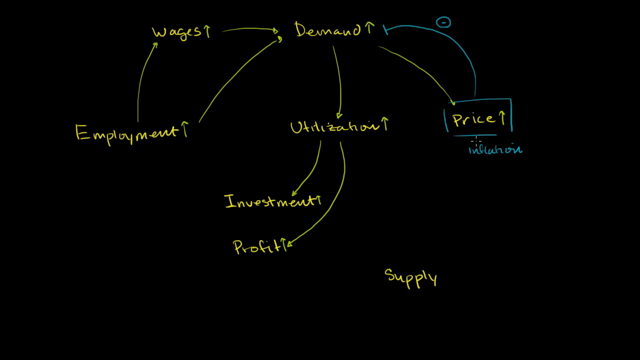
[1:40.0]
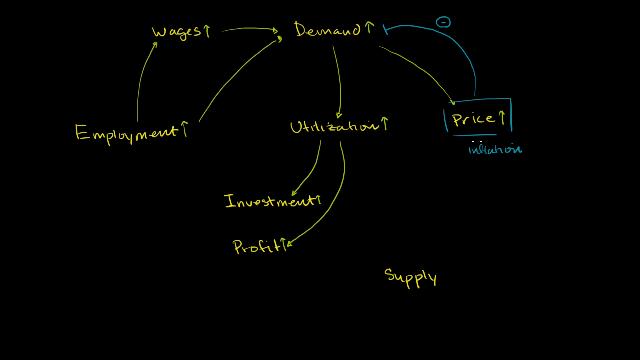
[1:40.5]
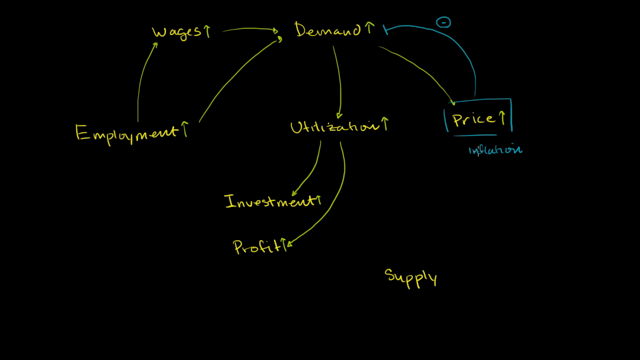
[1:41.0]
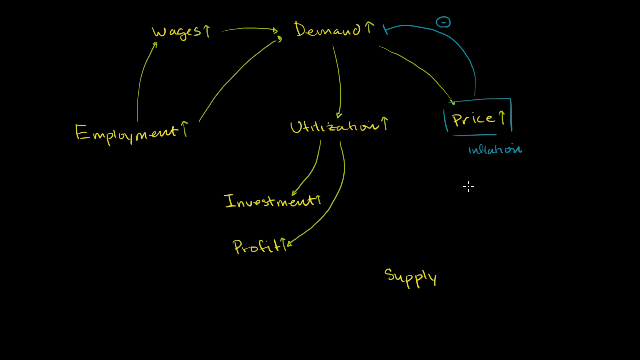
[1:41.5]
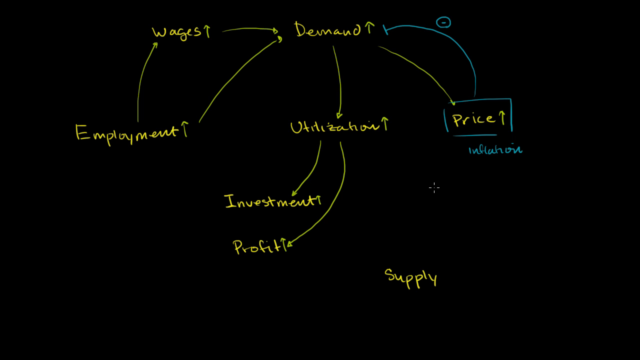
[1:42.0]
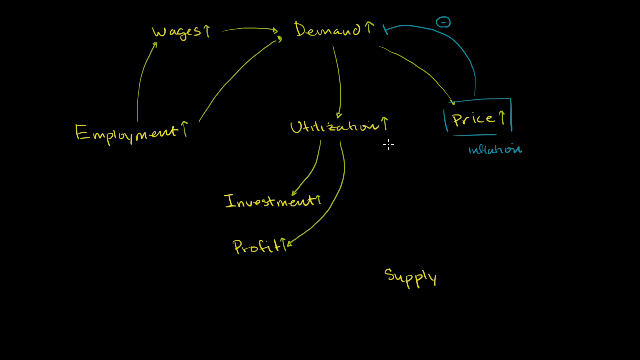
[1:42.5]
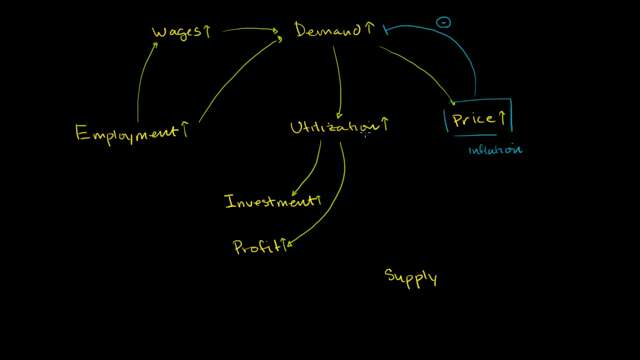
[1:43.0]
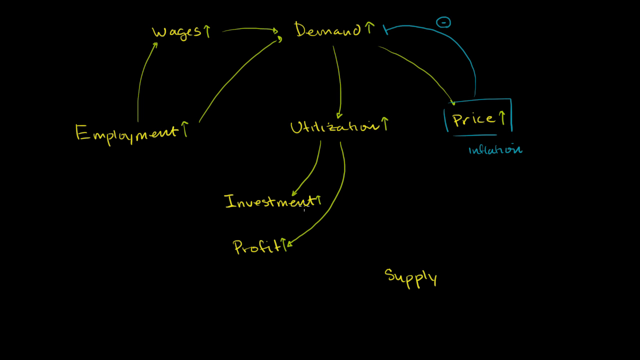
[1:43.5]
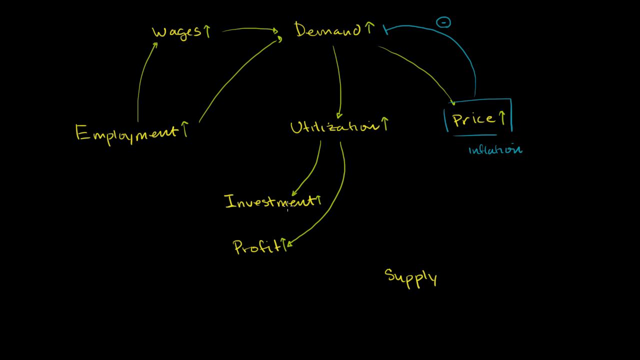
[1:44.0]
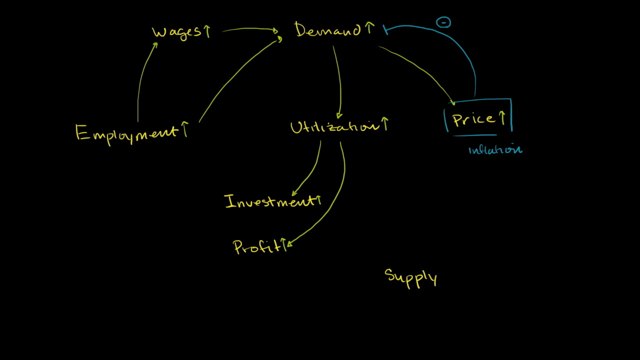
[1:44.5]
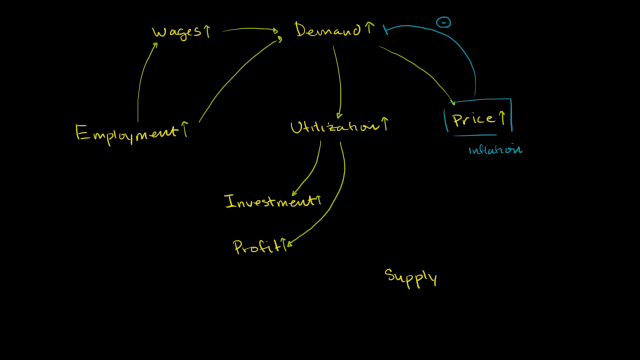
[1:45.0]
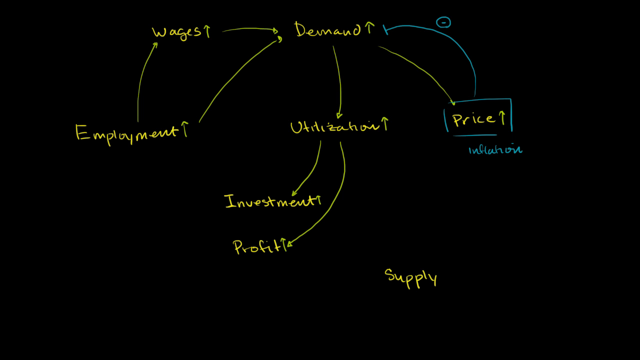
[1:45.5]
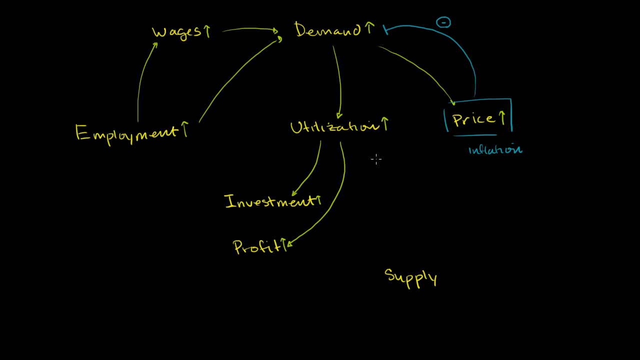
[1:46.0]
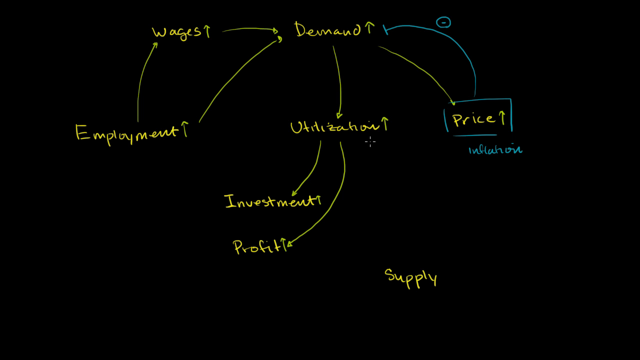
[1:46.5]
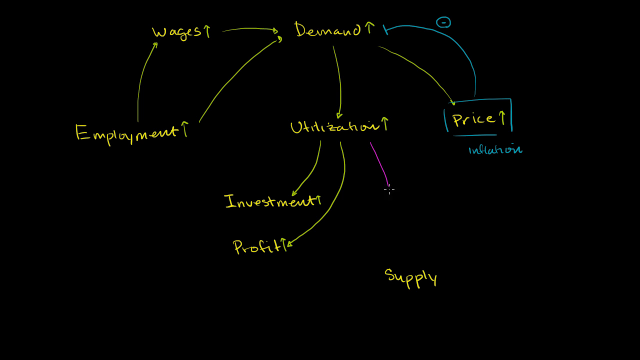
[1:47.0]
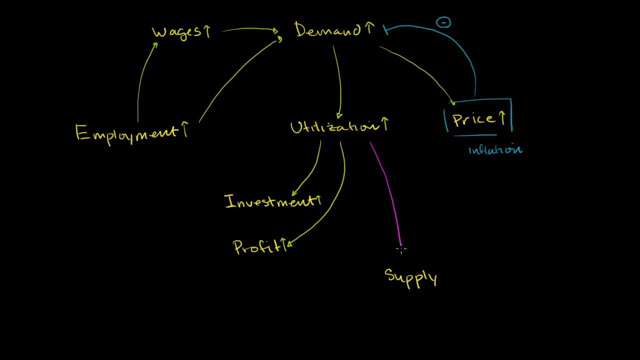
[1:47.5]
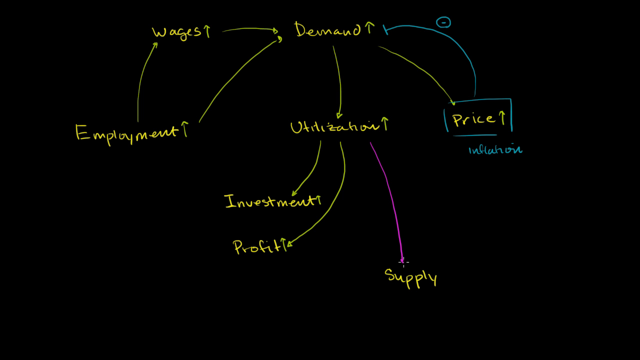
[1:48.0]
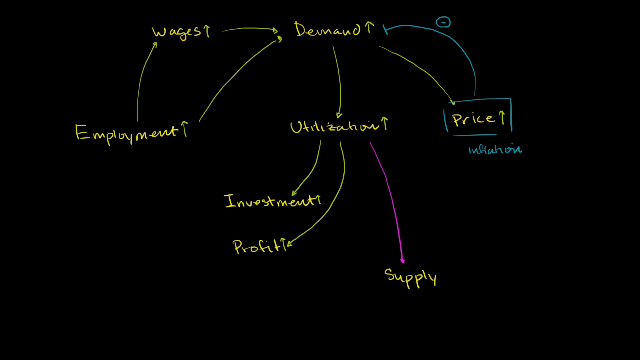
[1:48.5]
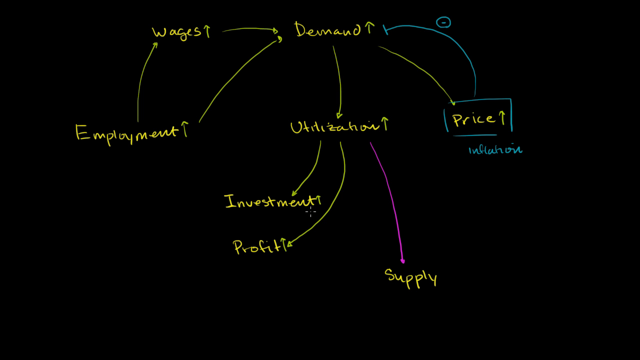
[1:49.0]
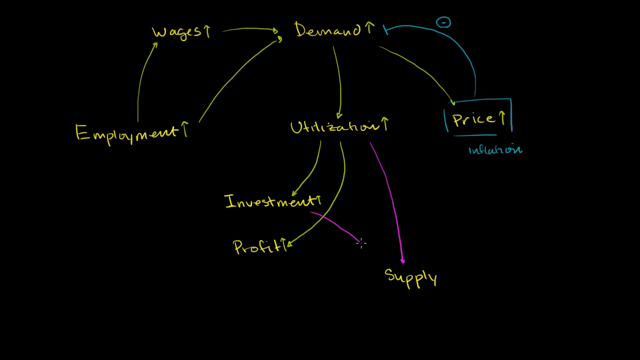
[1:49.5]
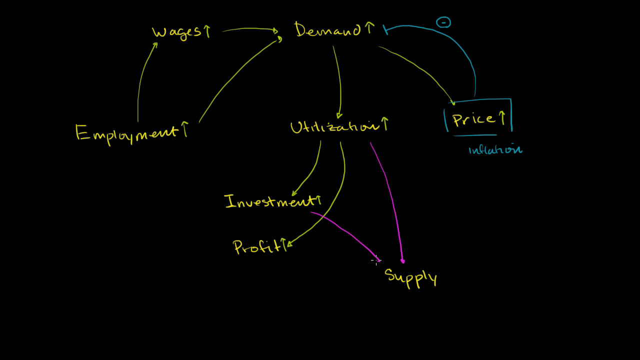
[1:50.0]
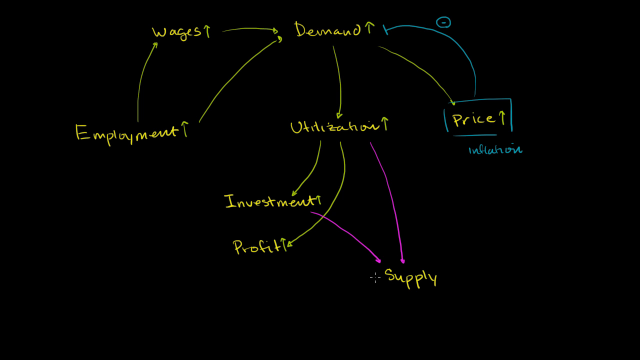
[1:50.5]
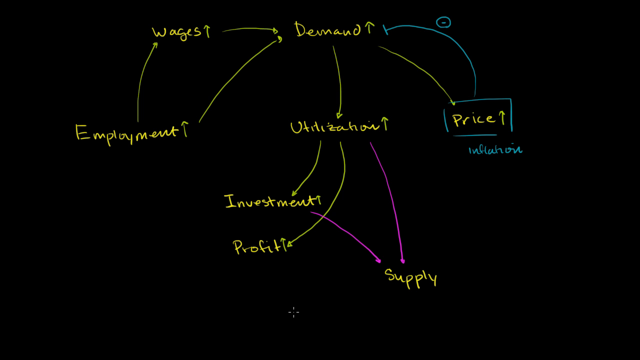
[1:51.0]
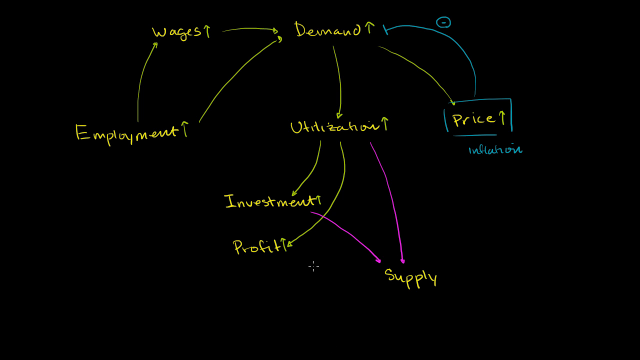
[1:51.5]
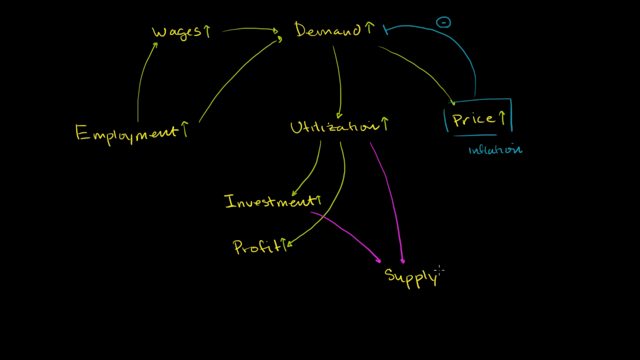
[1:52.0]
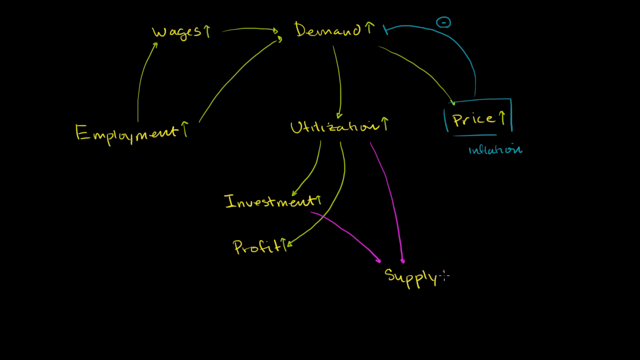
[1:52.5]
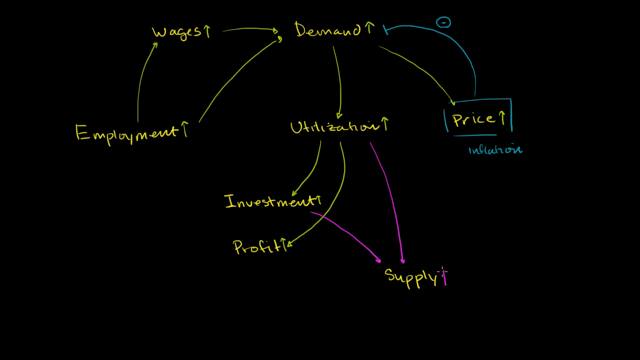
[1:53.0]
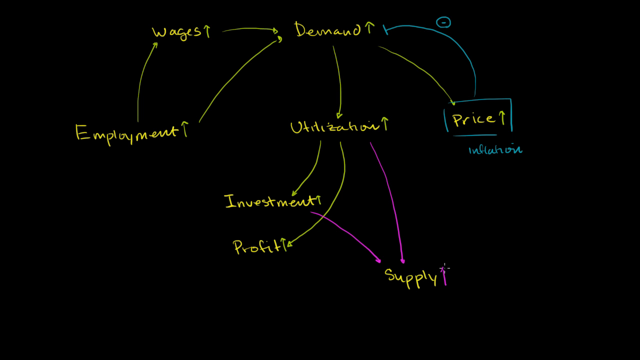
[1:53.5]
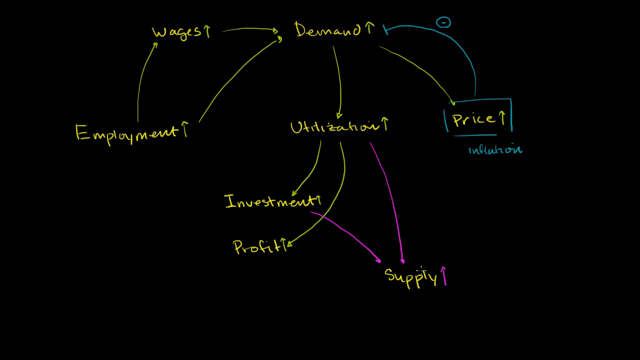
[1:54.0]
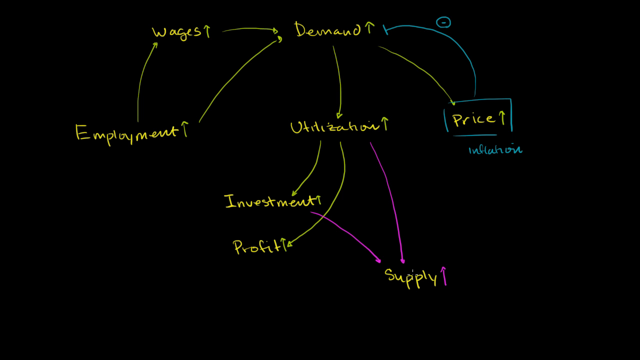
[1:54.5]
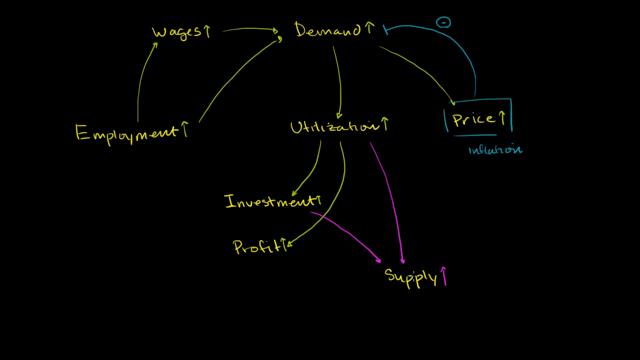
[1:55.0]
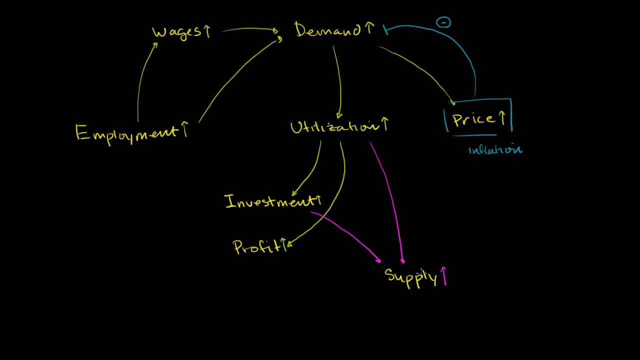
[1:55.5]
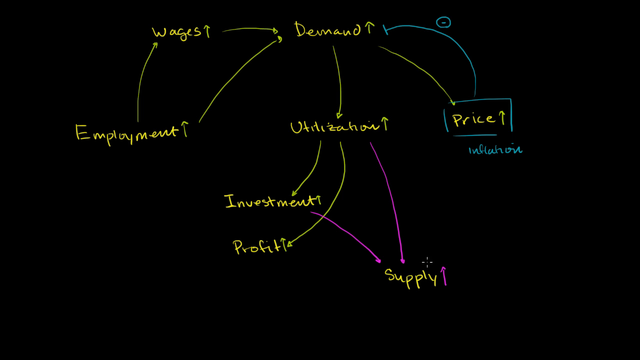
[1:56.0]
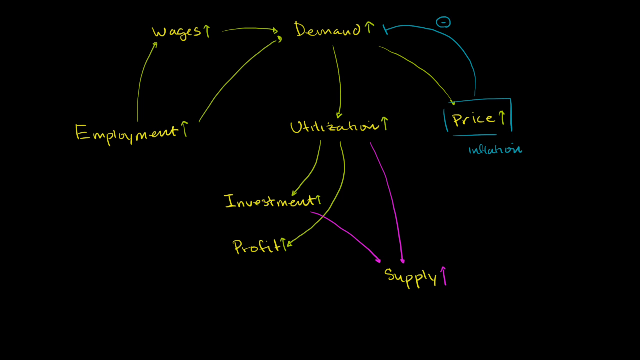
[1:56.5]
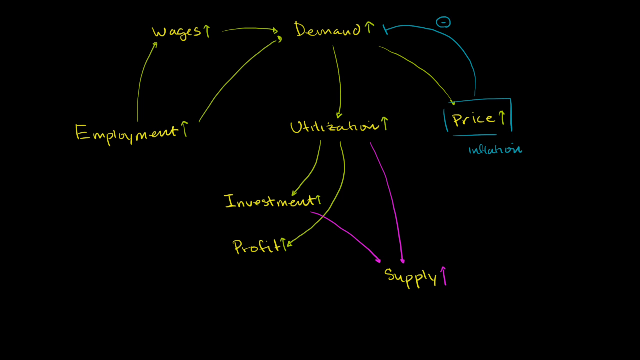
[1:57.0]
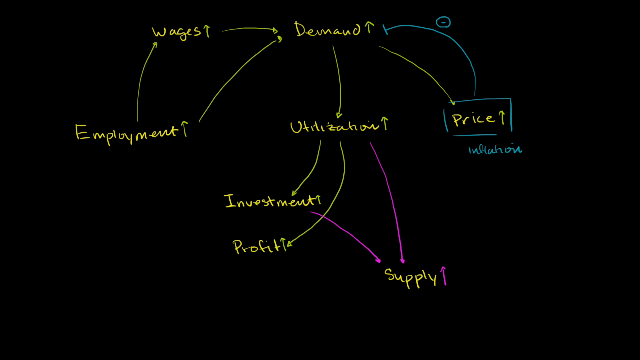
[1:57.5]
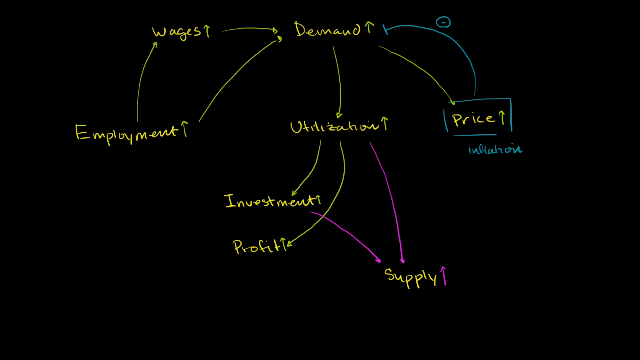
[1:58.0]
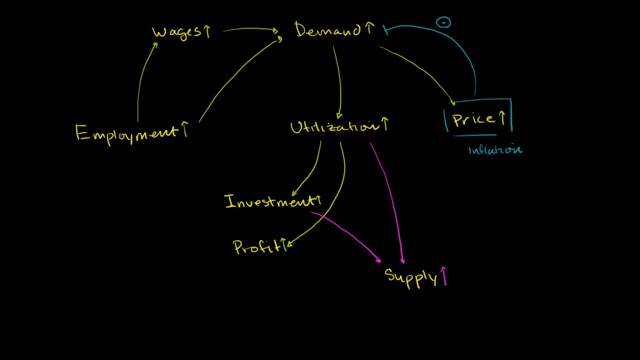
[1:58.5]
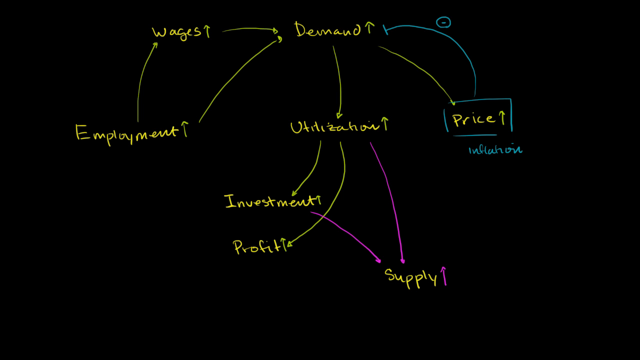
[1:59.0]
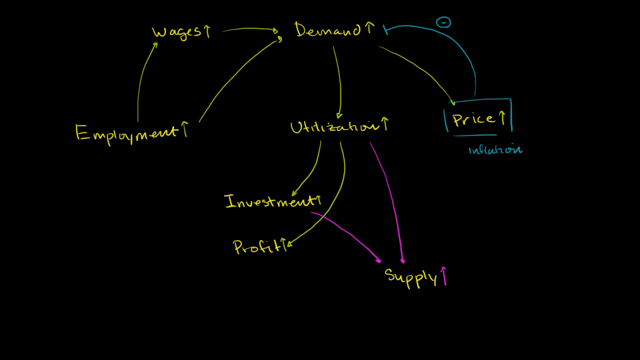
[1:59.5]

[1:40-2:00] The black screen shows the yellow words: "Wages" at the top left, "Demand" in the top middle, "Employment" on the left, "Utilization" in the middle and "Price" on the right below them, "Investment" below "Utilization," "Profit" below that, and "Supply" at the bottom right. Arrows point from "Employment" up to "Wages," from "Employment" to "Demand," from "Wages" to "Demand," from "Demand" down to "Utilization," from "Utilization" down to "Investment" and "Profit," and from "Demand" down to "Price." "Price" has a blue box around it with a line pointing up to "Demand" with a circled minus sign, and "Inflation" is written in blue below it. A purple line is now drawn from "Utilization" down to "Supply" and from "Investment" down to "Supply," and a small purple arrow symbol pointing upward appears next to "Supply."